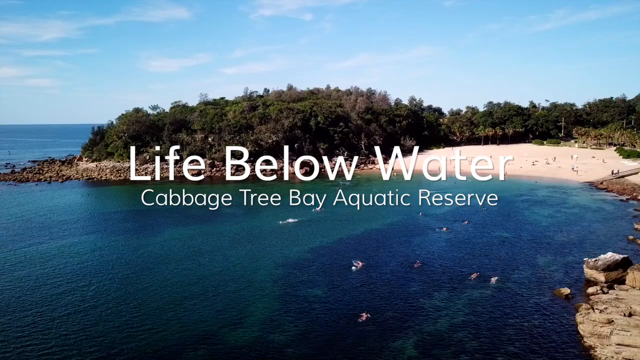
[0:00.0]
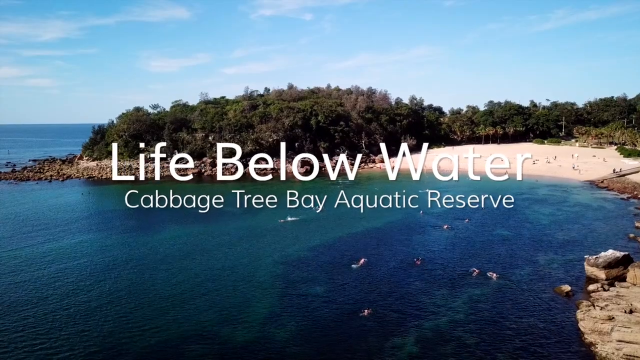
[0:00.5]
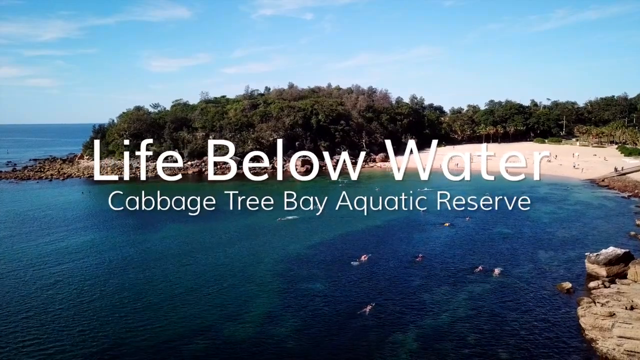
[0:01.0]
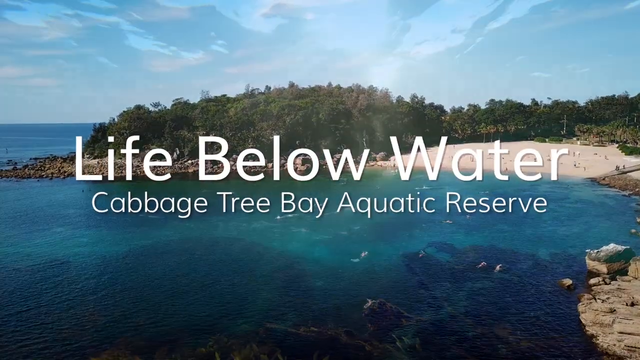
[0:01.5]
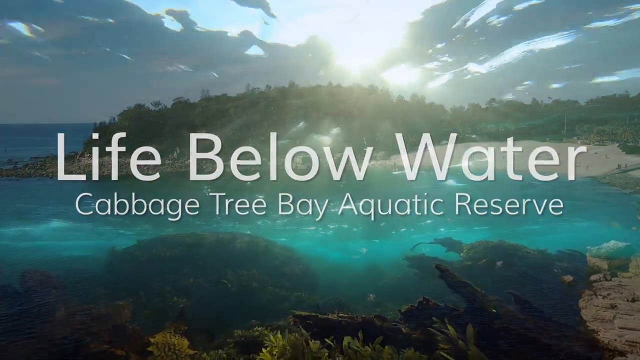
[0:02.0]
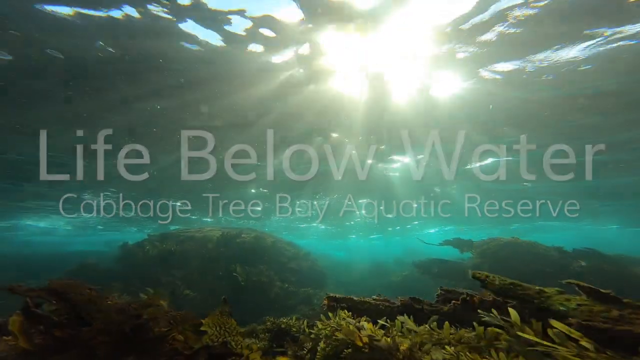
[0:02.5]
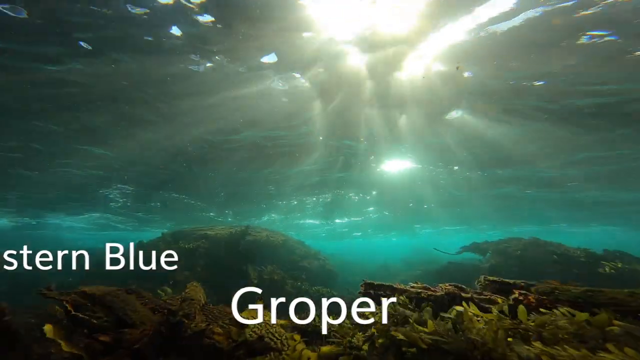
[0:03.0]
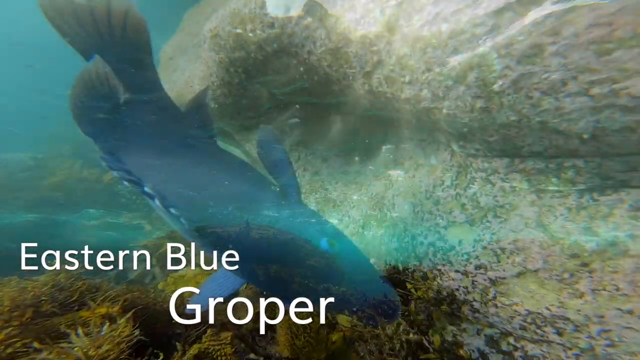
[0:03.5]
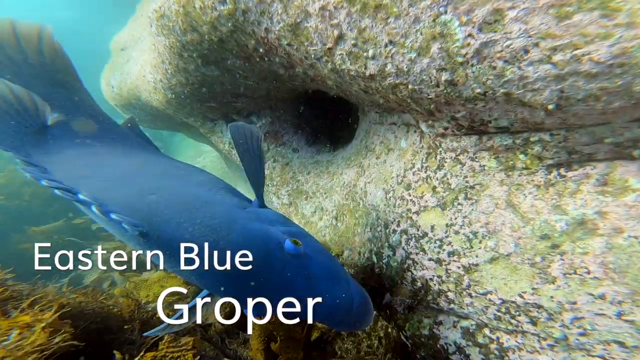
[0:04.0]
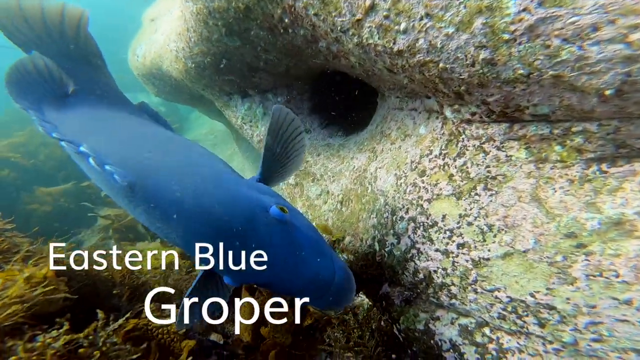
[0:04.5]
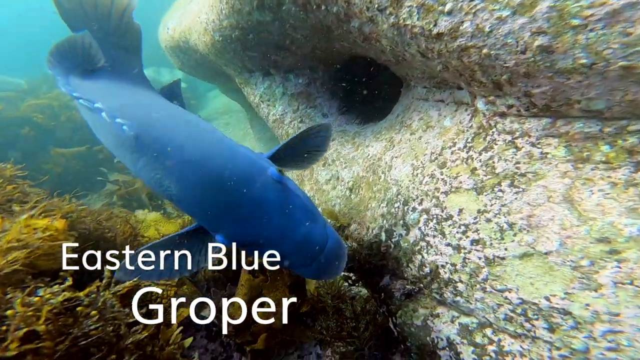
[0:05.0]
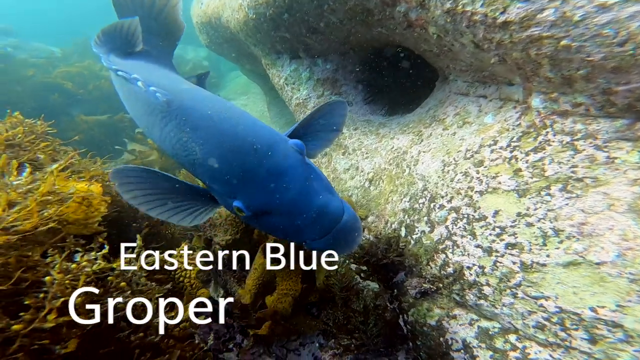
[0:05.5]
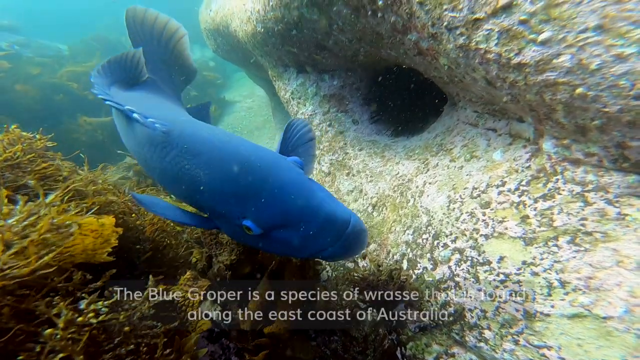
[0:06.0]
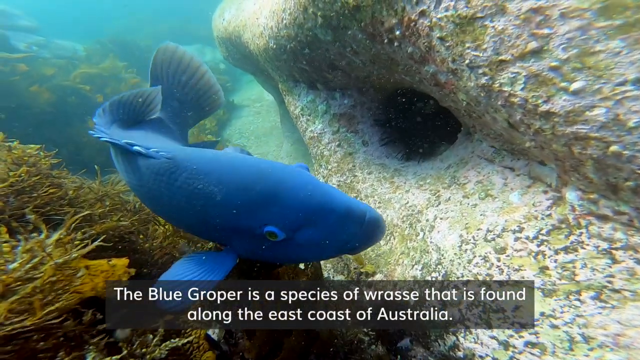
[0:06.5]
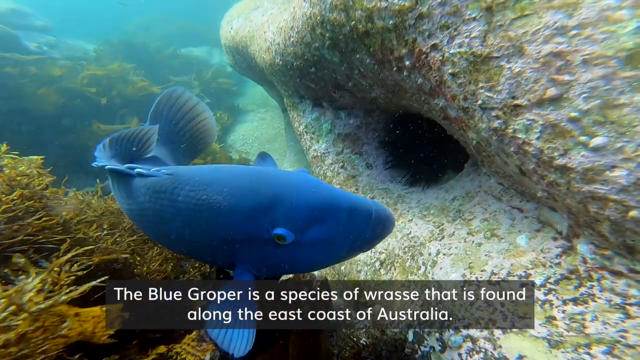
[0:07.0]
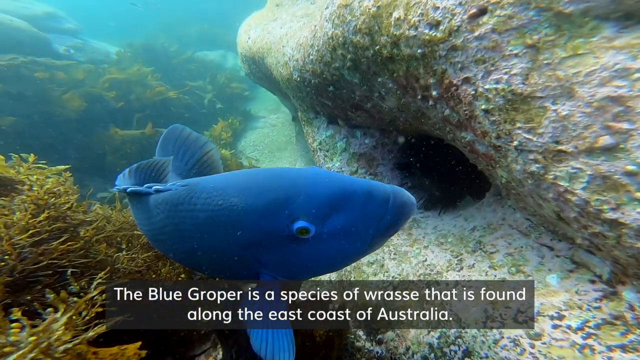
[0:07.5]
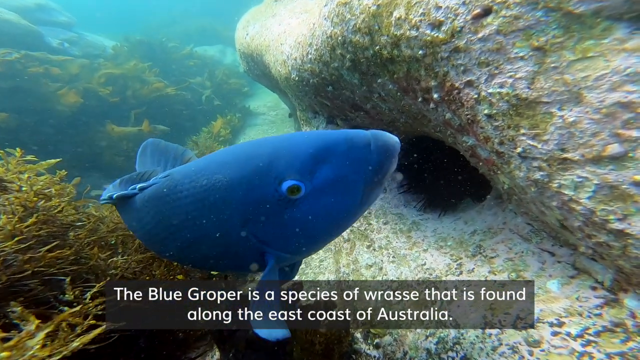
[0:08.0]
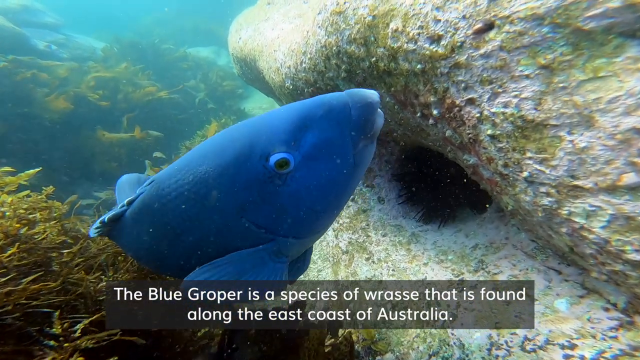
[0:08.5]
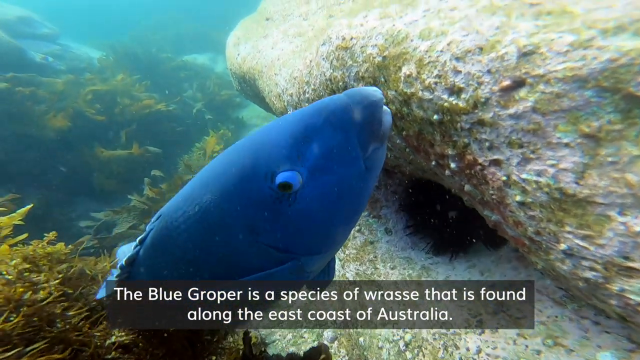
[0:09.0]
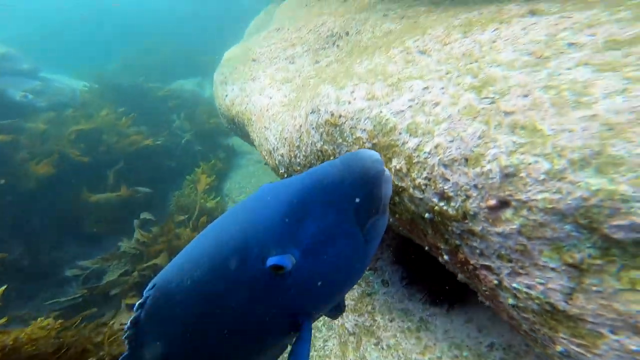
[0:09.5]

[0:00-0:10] A beach with white sand, a body of water and some forest appears. At the start, white text reads "life below water", and beneath it is the text "cabbage tree bay aquatic reserve". The video then moves underwater, where a fish swims. At the bottom of the screen the words "Eastern blue grouper" appear, followed by text below that says "the blue grouper is a species of wrasse" and mentions that it is "found along the east coast of Australia". Later there is a hole just beside where the fish is.